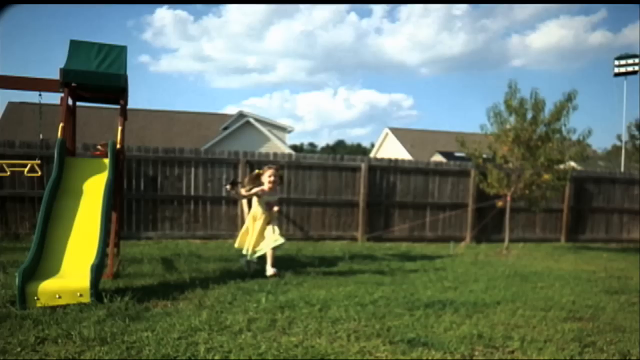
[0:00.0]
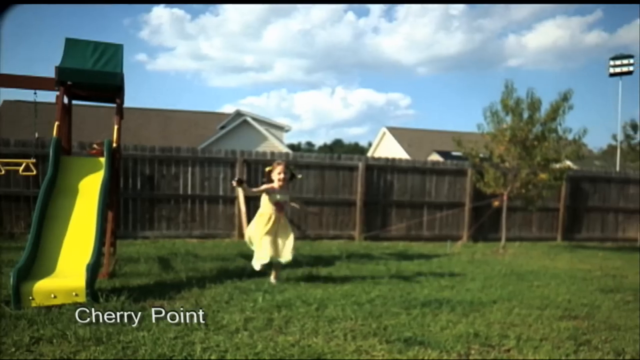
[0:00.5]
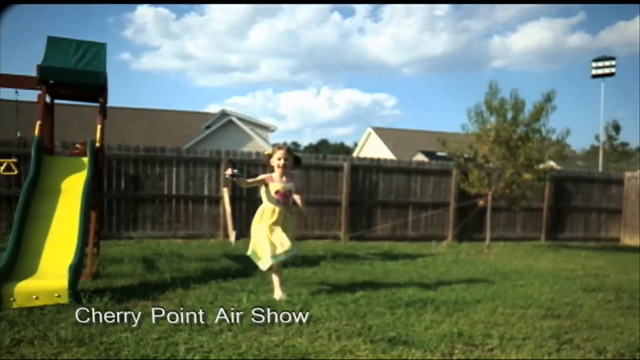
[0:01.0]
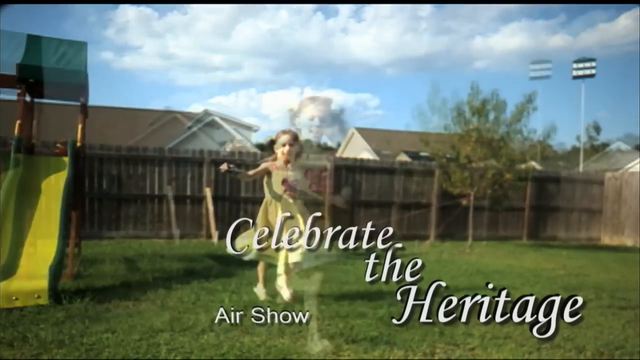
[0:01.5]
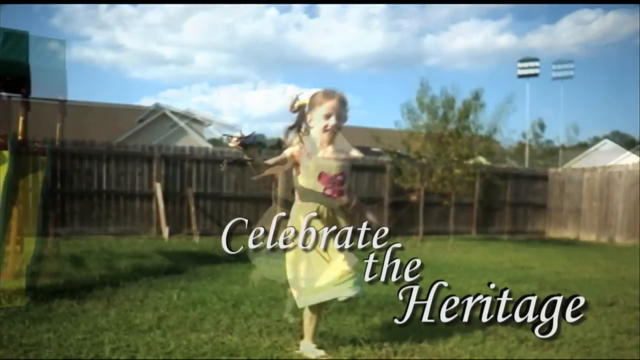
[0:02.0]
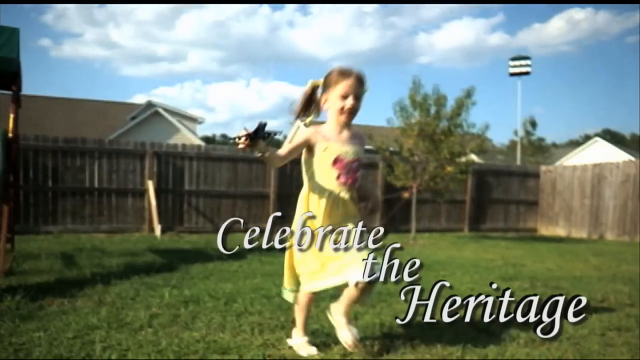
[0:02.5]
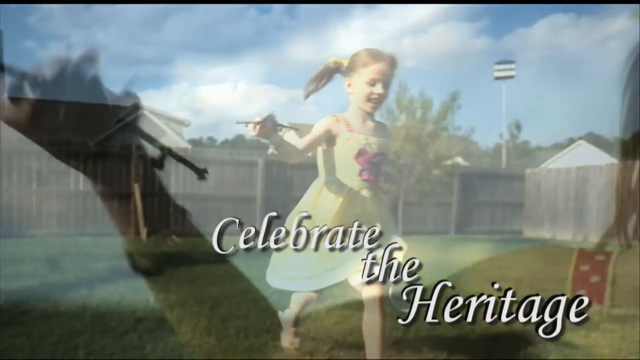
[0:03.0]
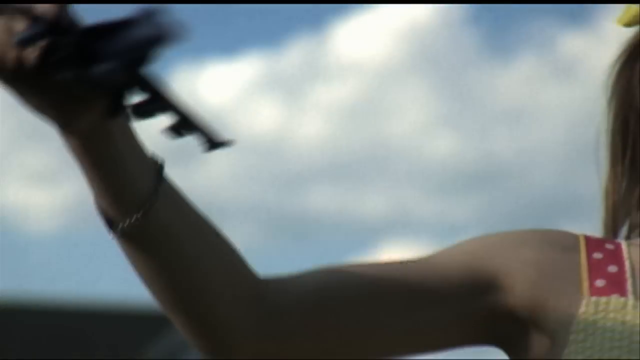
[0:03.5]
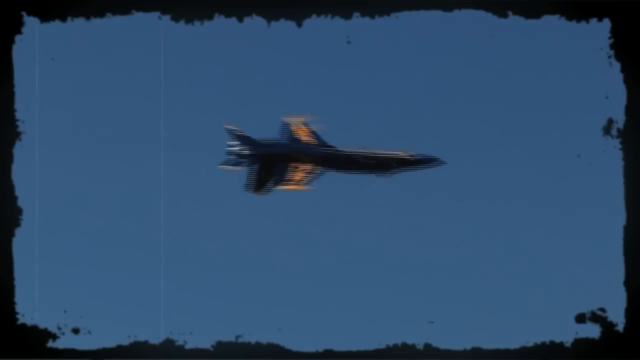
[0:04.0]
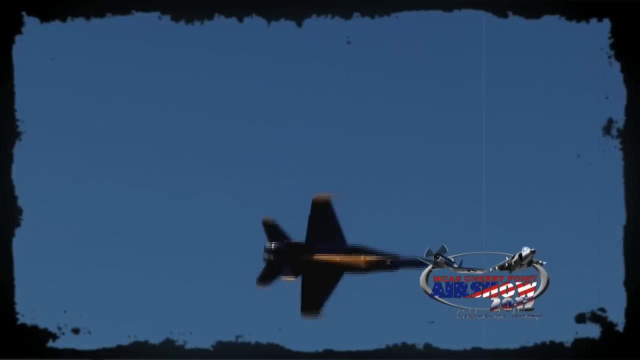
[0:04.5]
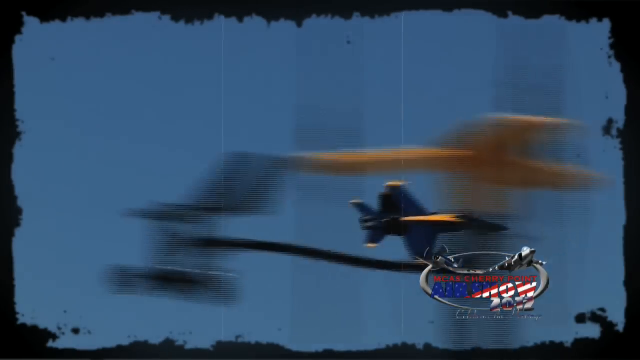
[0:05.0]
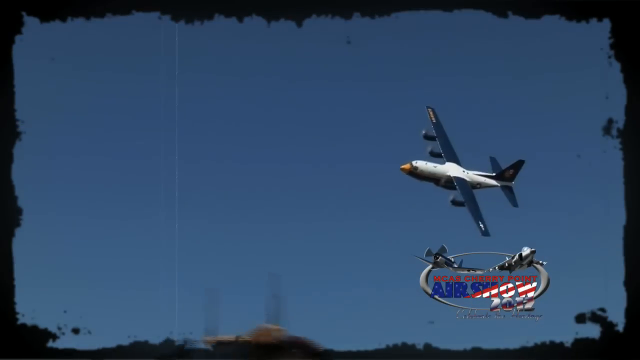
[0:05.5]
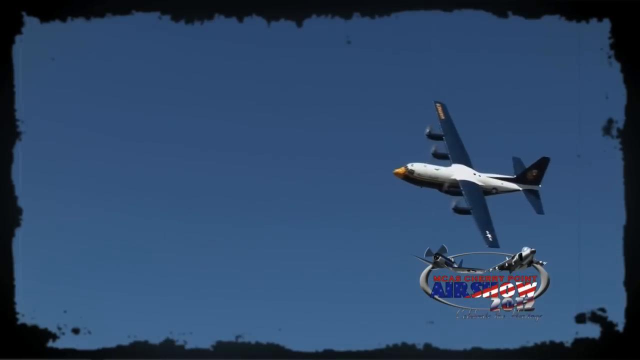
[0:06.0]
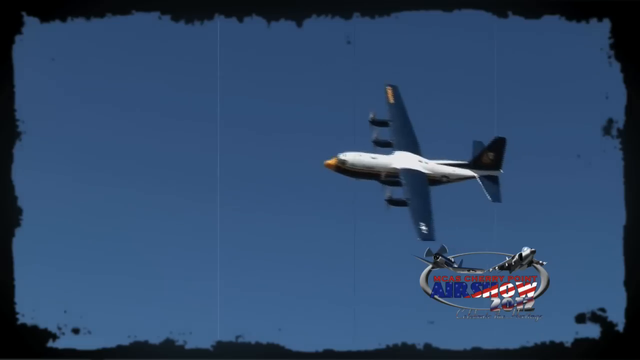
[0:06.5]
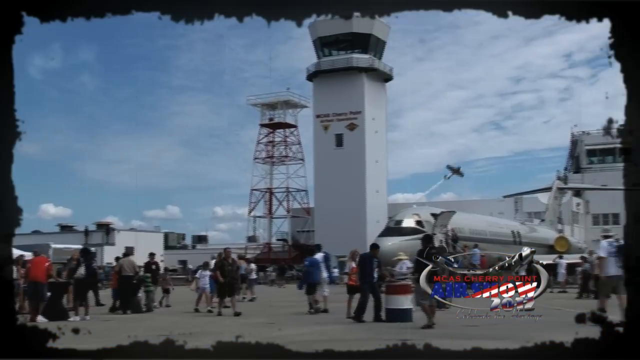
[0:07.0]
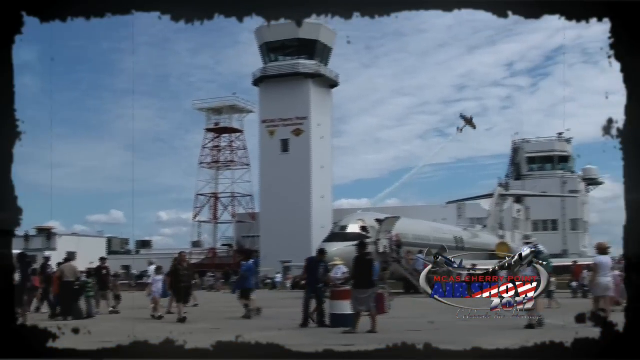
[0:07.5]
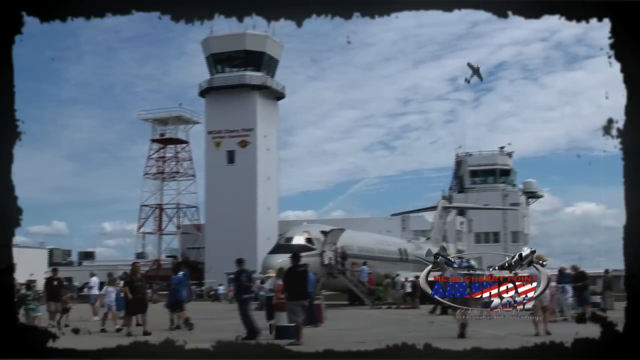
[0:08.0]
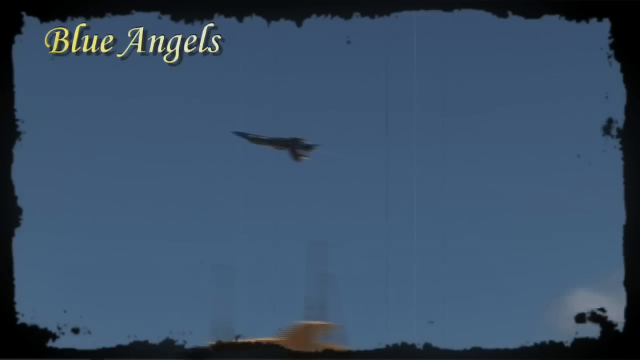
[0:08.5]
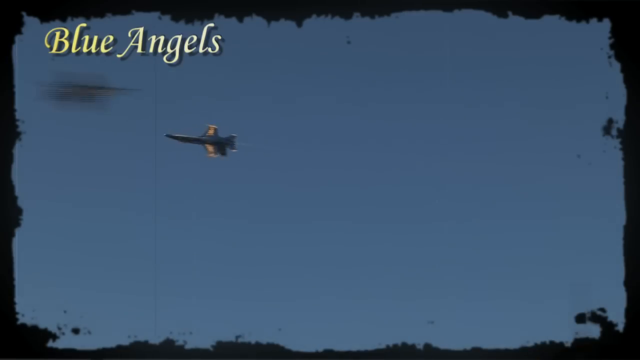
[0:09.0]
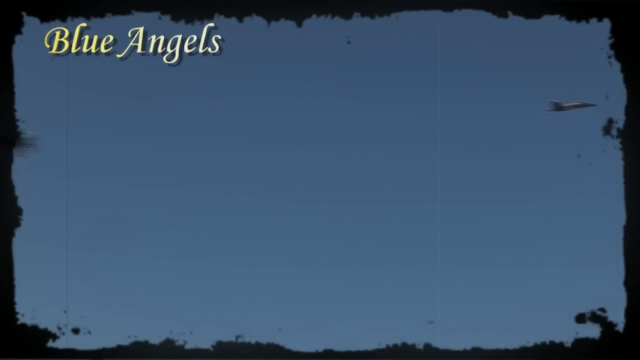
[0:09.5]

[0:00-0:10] Scenes from American life that indicate patriotism appear in quick succession. A young girl in a yellow dress runs through the grass of a backyard beside a yellow slide, smiling, while a caption reads "Celebrate the Heritage." The scene switches to an air show, where various American airplanes do stunts in the air, and a caption reads "Blue Angels." The video is promoting an air show, presenting the sight of American fighter planes in the sky as patriotic and as celebrating the American heritage.